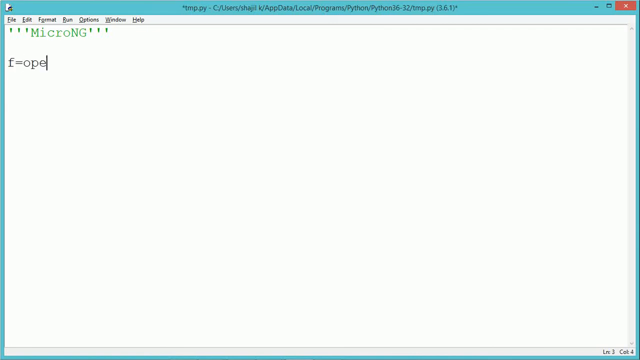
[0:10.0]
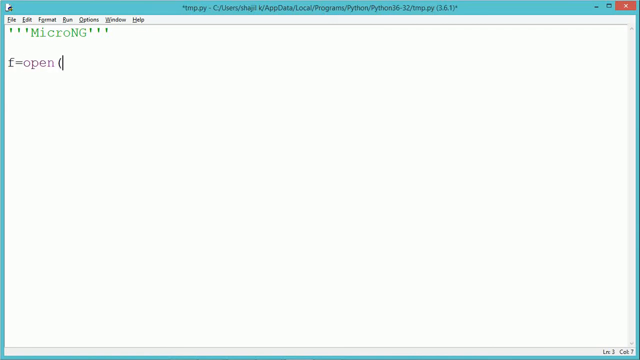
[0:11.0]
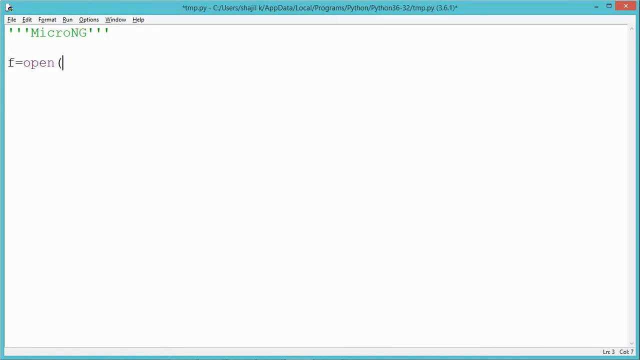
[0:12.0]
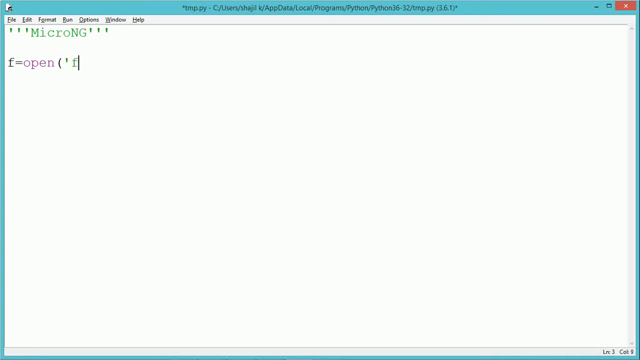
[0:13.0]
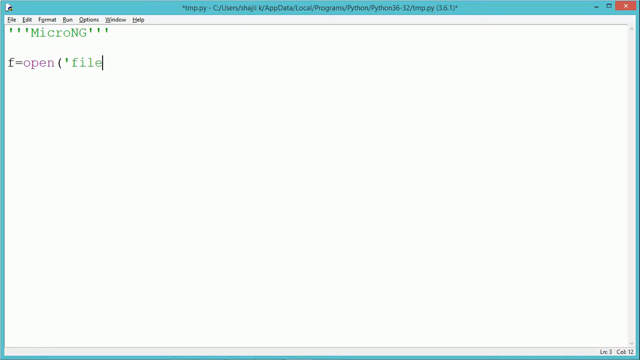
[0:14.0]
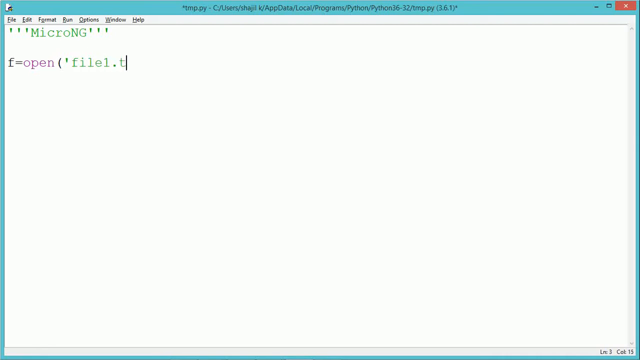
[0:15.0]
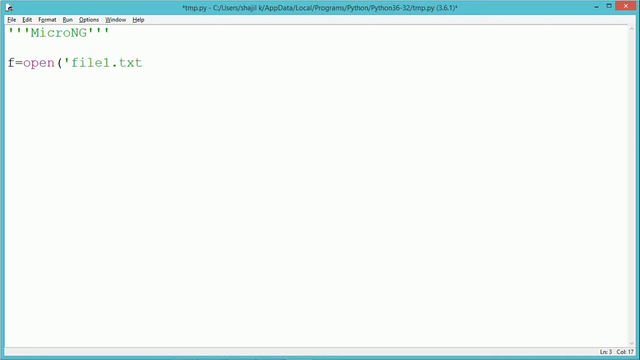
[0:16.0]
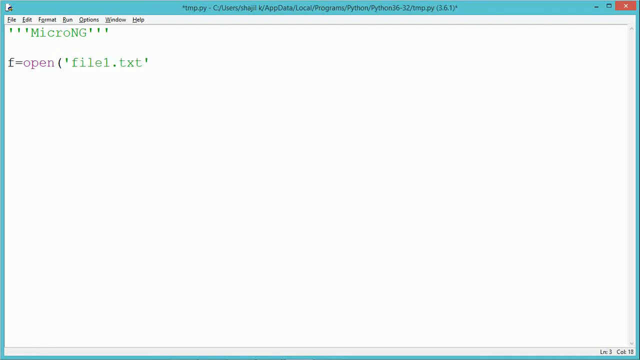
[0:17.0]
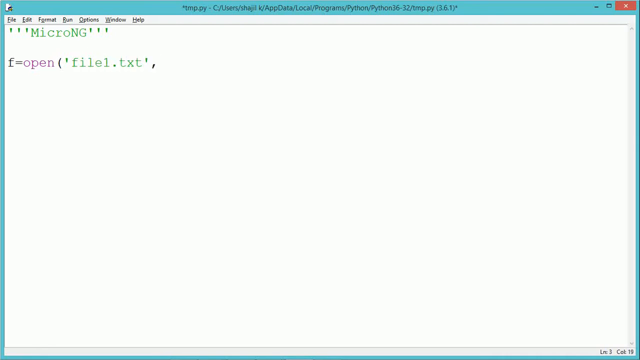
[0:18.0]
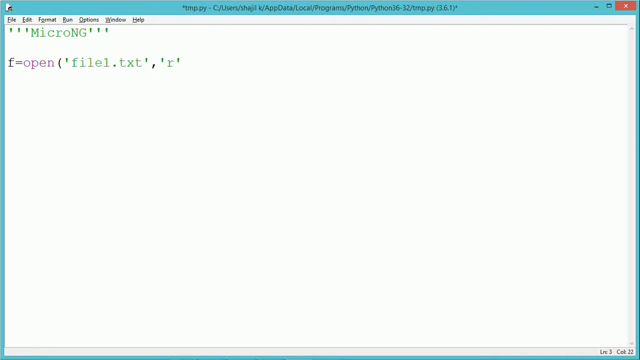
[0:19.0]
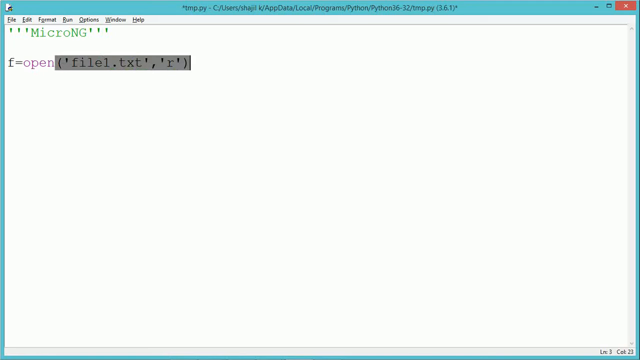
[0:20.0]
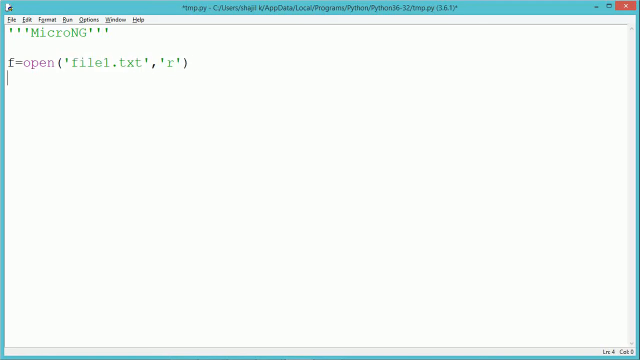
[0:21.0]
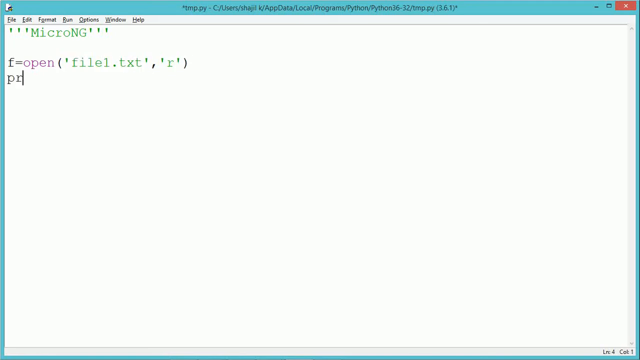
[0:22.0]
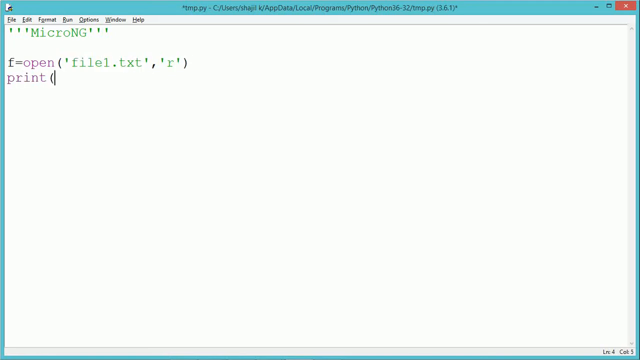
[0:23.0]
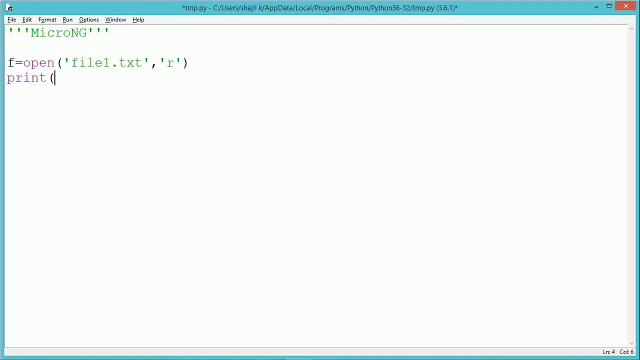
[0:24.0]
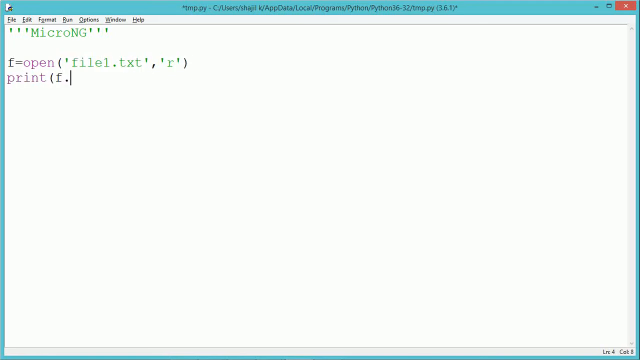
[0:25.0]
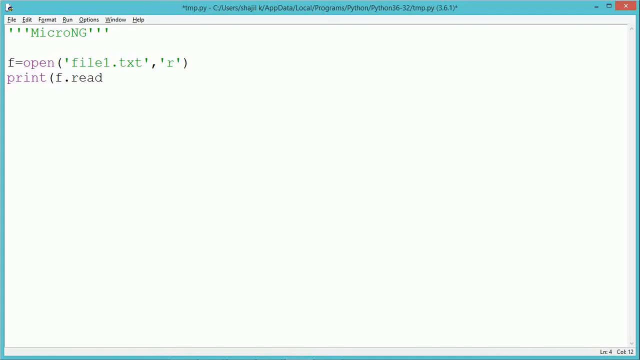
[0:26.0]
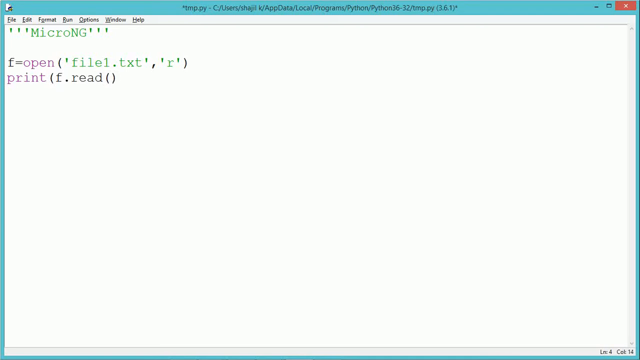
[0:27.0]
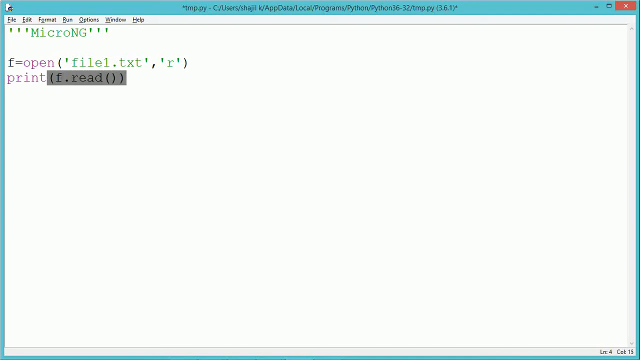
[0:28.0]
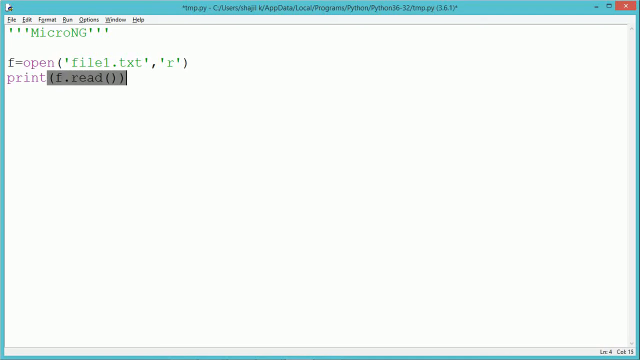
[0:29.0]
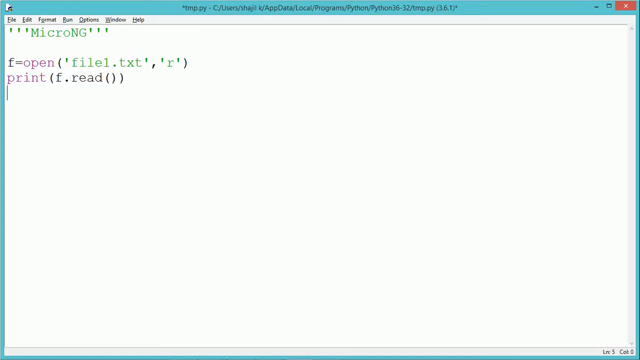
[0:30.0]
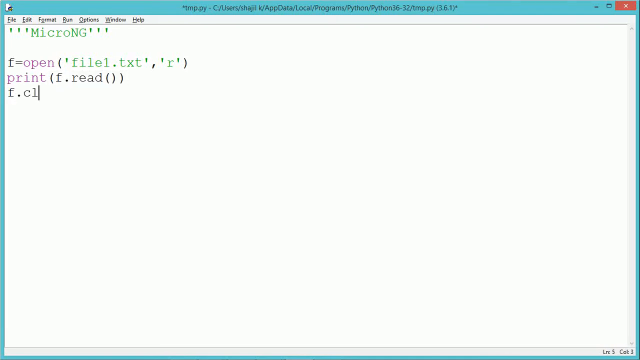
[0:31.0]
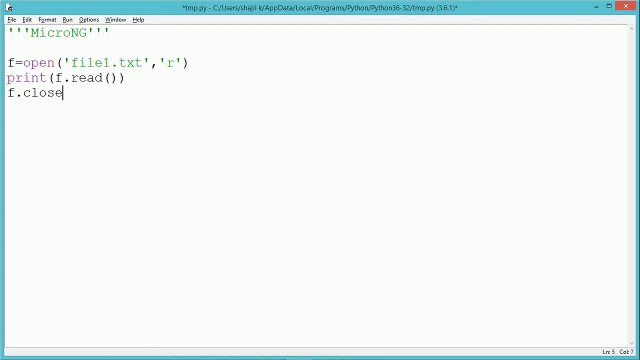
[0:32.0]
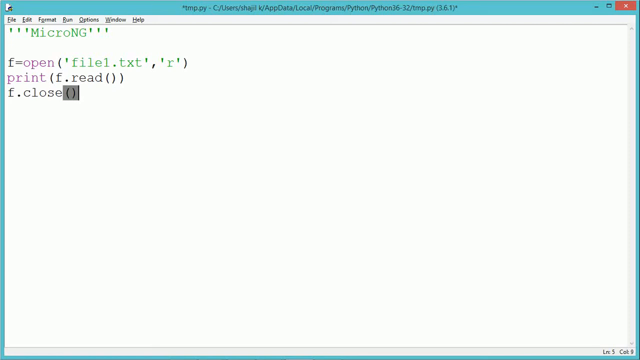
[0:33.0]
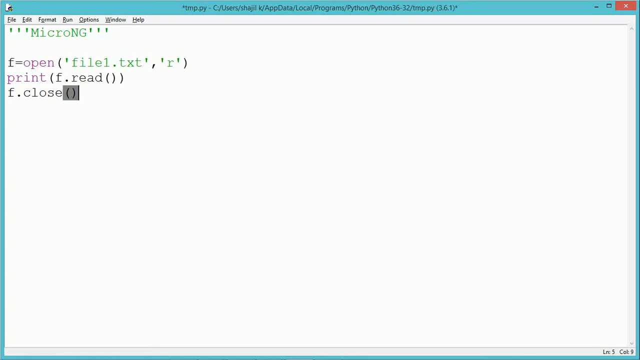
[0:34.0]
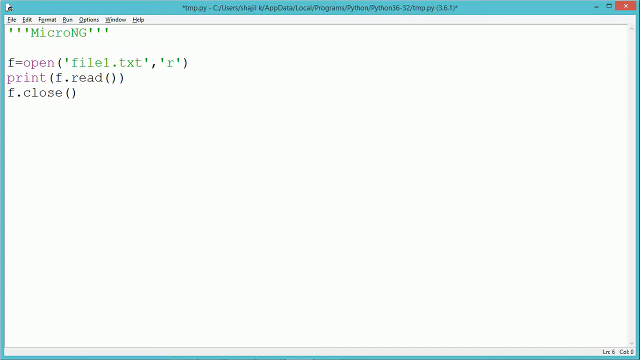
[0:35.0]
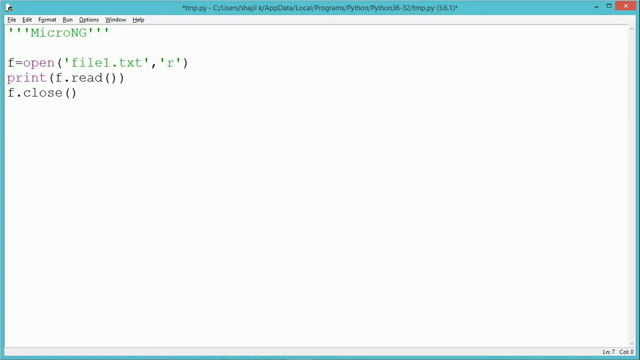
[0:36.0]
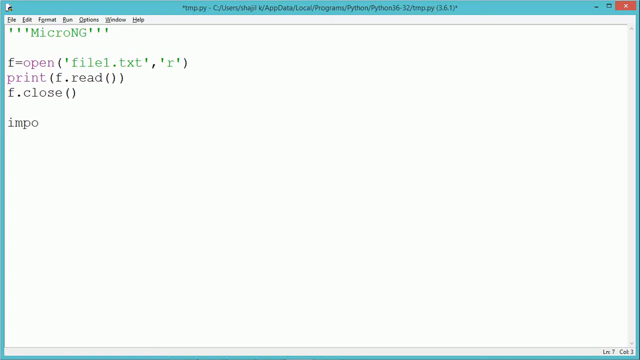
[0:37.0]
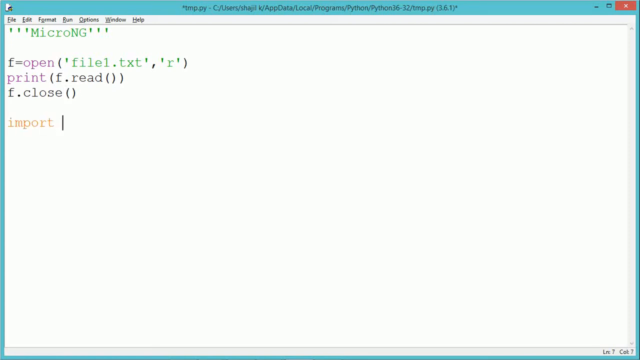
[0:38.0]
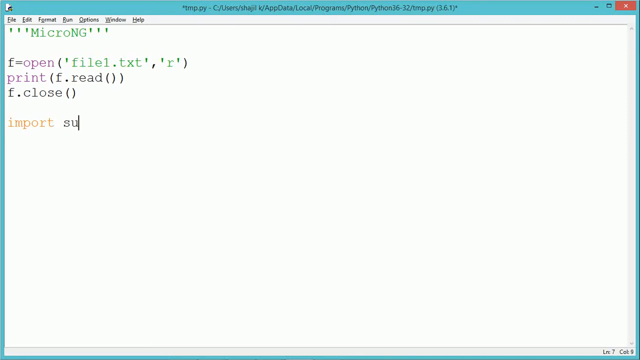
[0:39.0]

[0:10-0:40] A file named tmp.py is open; it is in the programs folder. The menu at the top left of the compiler window has File, Edit, Format, Run, Options, Window and Help. The user has entered a highlighted line of text in green, a comment that is not part of the code. The user then enters code reading f="file1.txt", which opens file1.txt, followed by a print command that prints the file f, and then closes it with f.close. The comment is written in green, while the code is written in black, purple and orange.